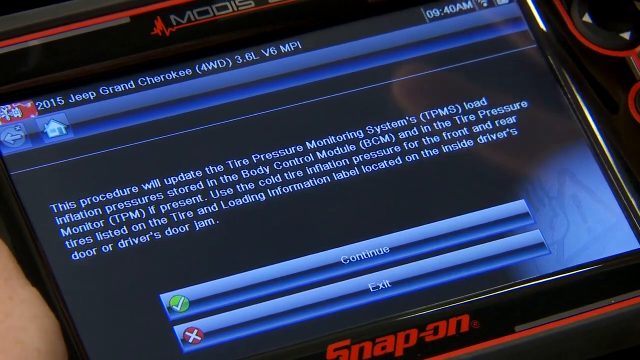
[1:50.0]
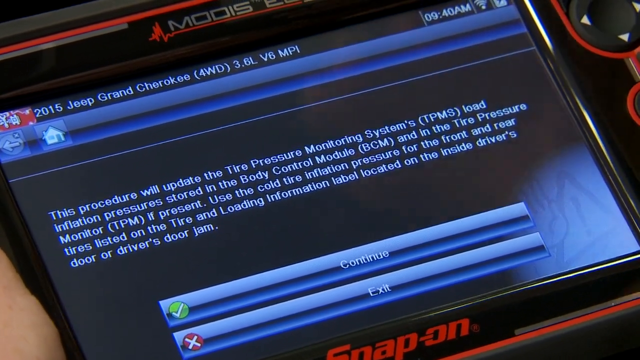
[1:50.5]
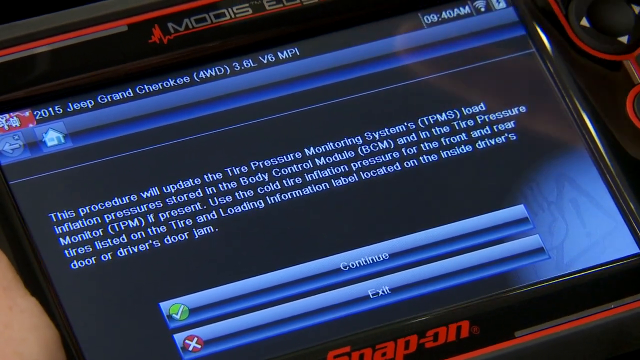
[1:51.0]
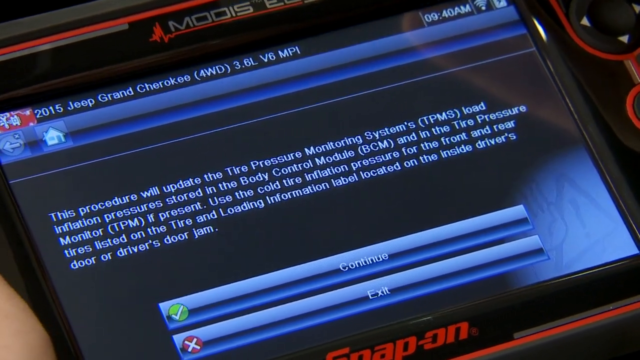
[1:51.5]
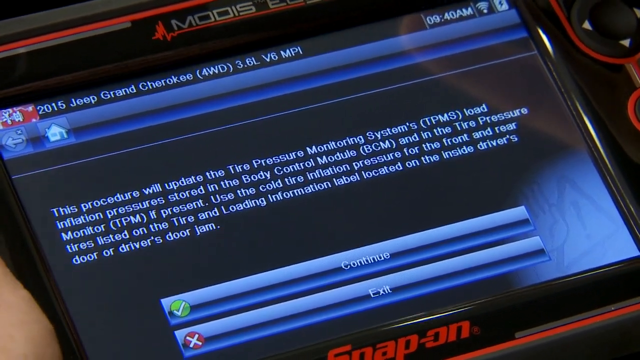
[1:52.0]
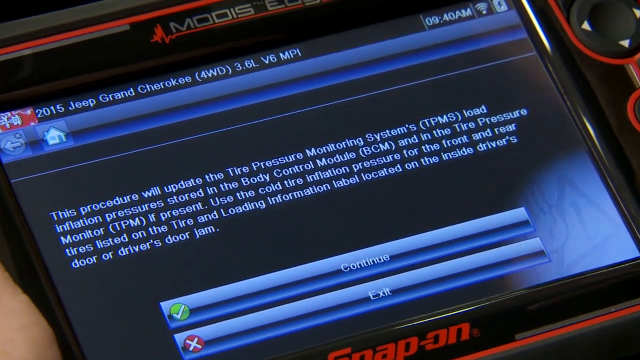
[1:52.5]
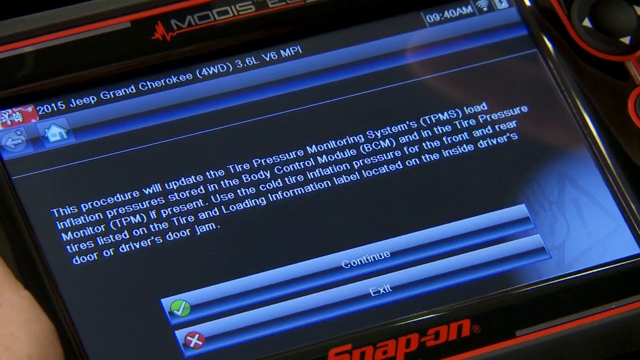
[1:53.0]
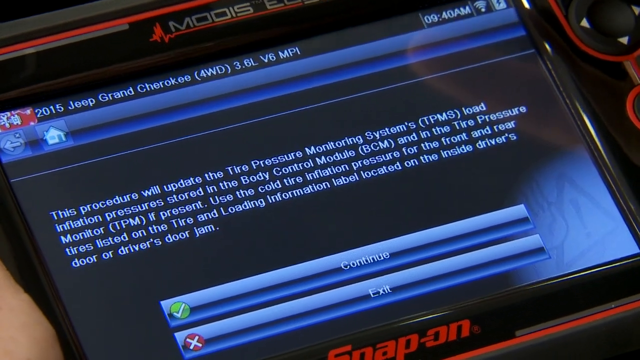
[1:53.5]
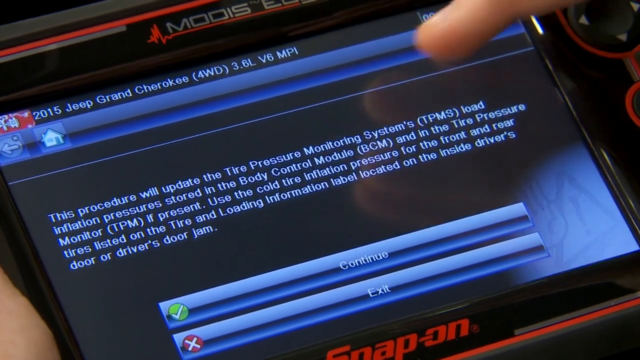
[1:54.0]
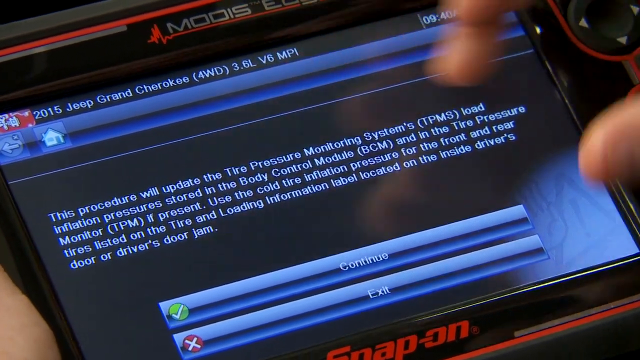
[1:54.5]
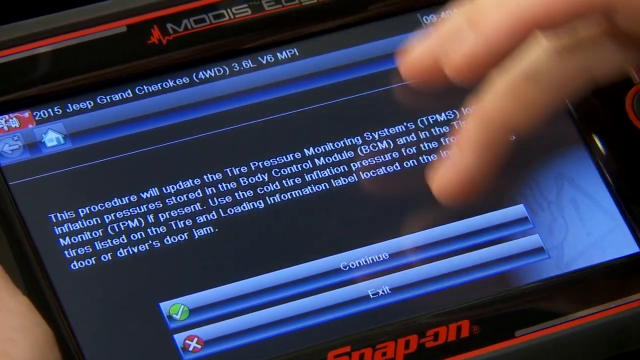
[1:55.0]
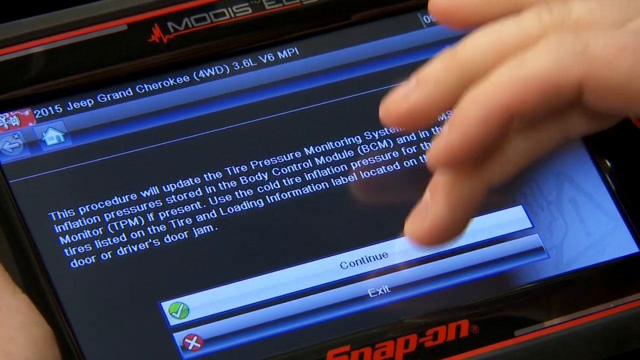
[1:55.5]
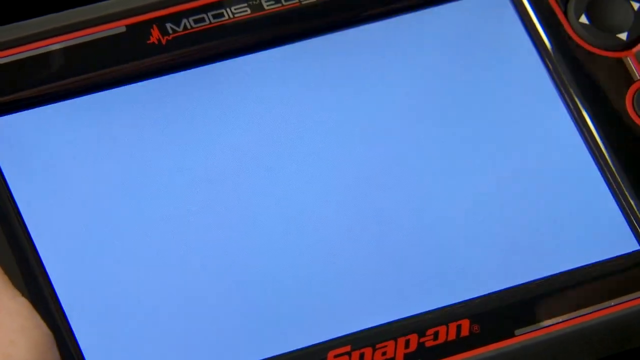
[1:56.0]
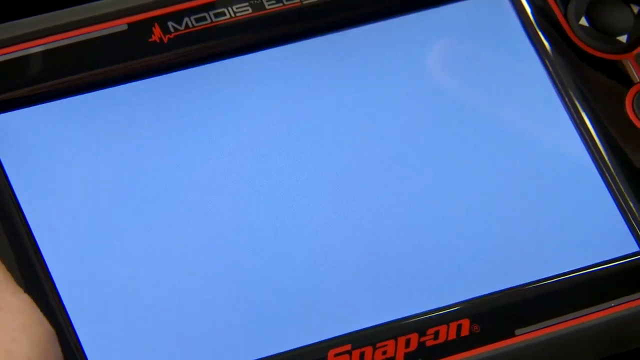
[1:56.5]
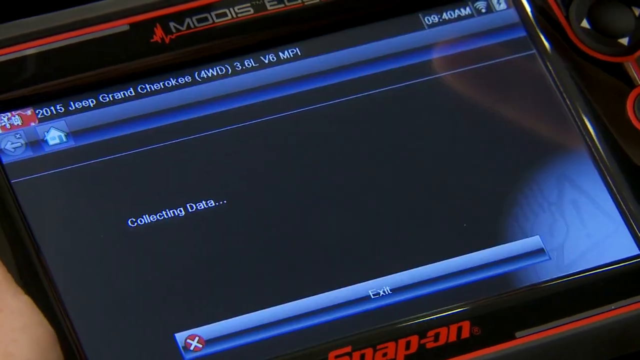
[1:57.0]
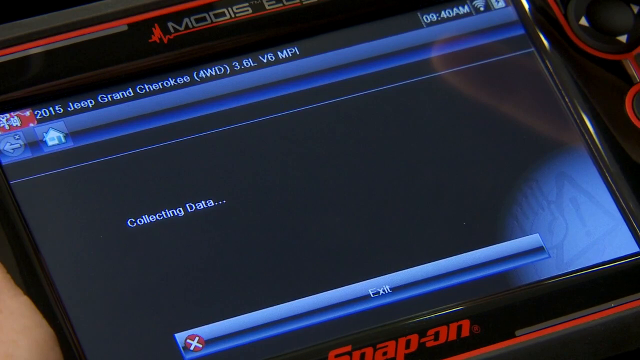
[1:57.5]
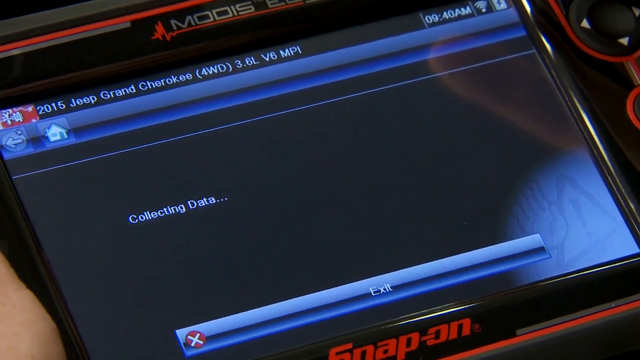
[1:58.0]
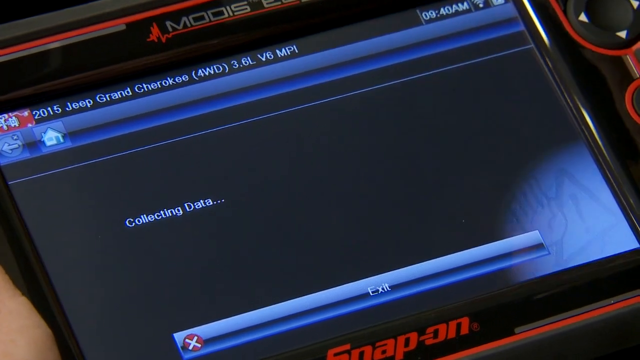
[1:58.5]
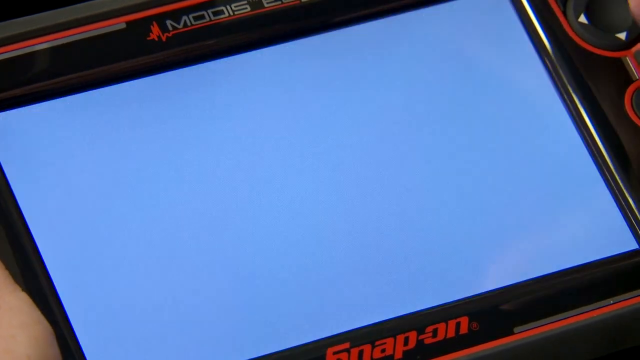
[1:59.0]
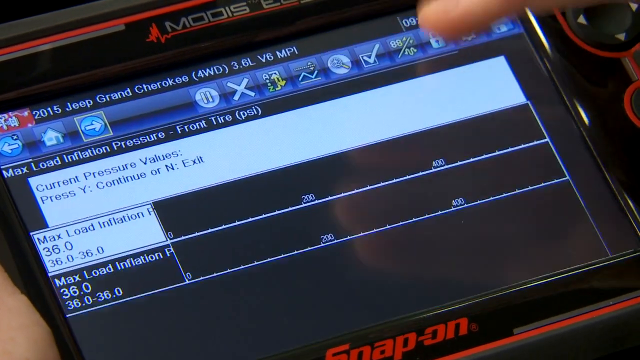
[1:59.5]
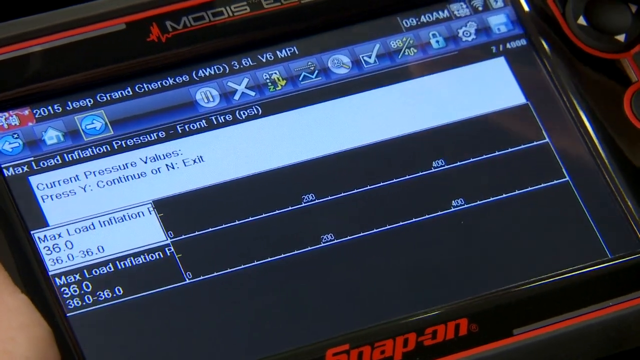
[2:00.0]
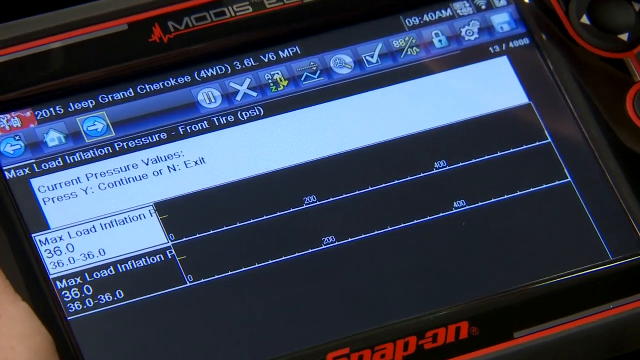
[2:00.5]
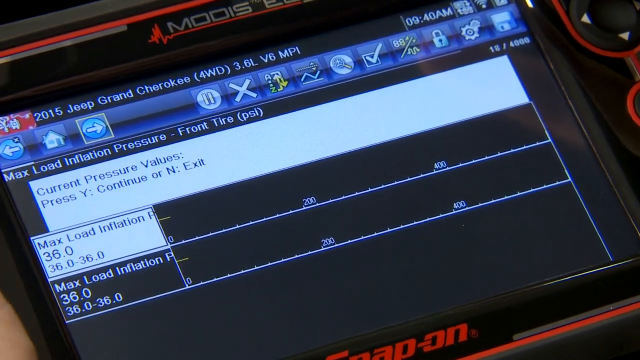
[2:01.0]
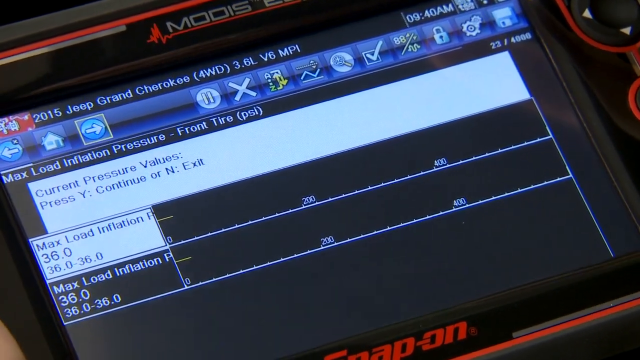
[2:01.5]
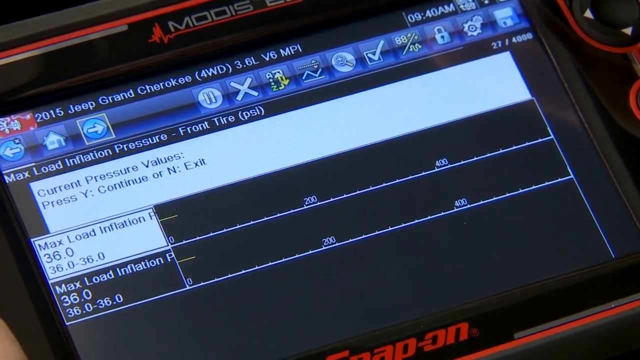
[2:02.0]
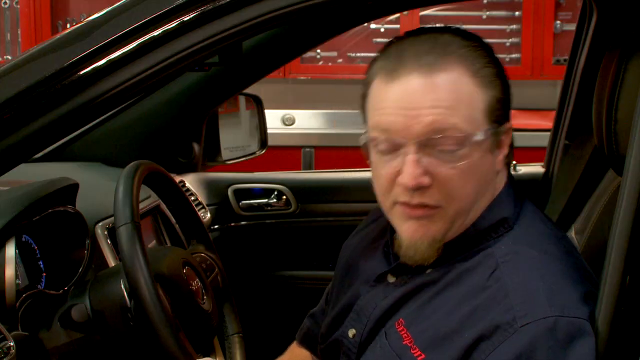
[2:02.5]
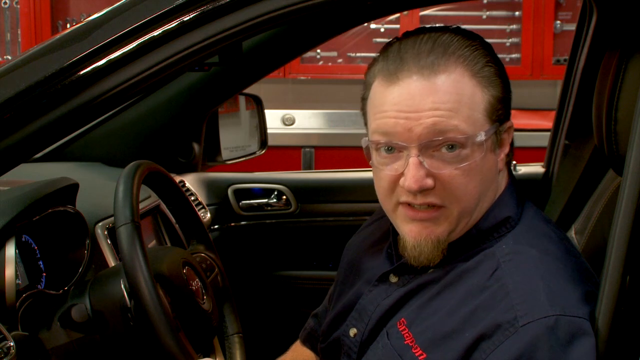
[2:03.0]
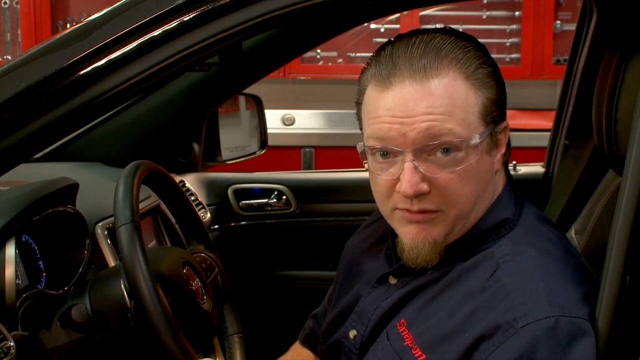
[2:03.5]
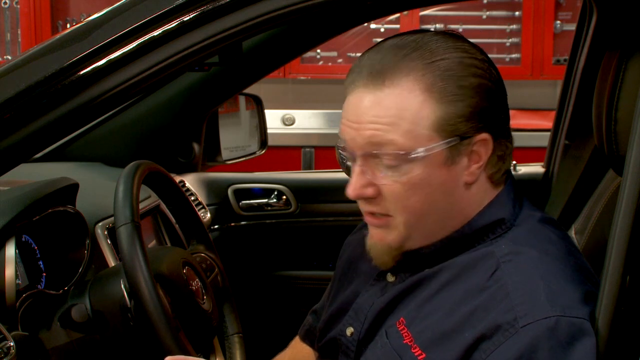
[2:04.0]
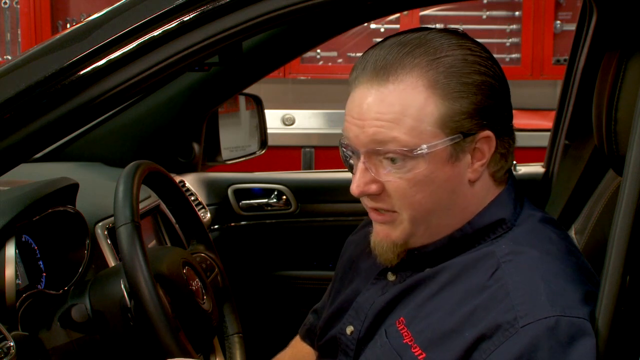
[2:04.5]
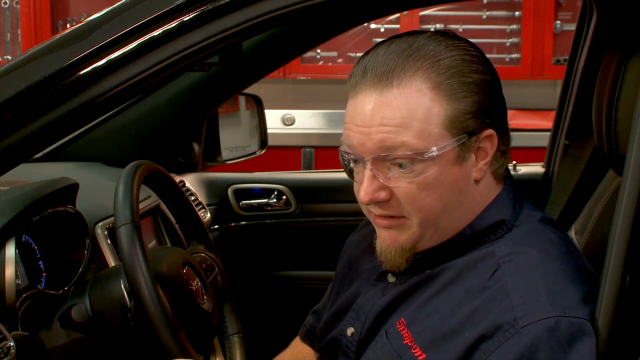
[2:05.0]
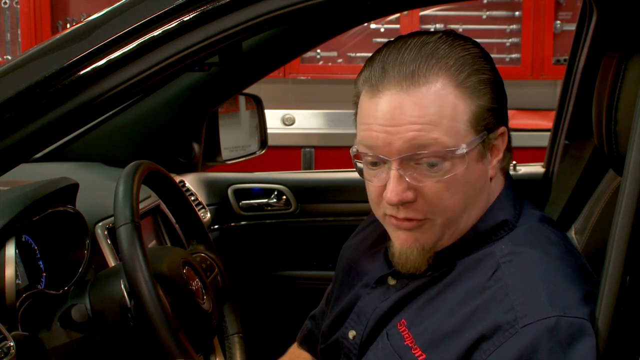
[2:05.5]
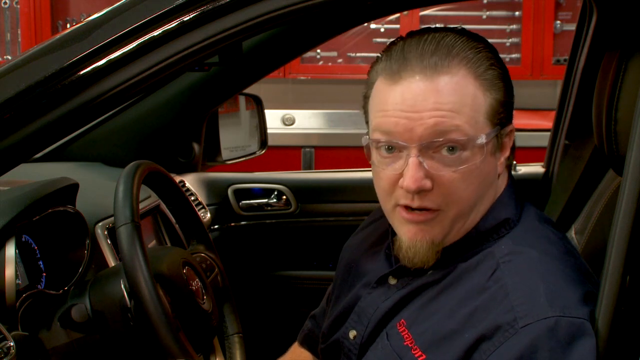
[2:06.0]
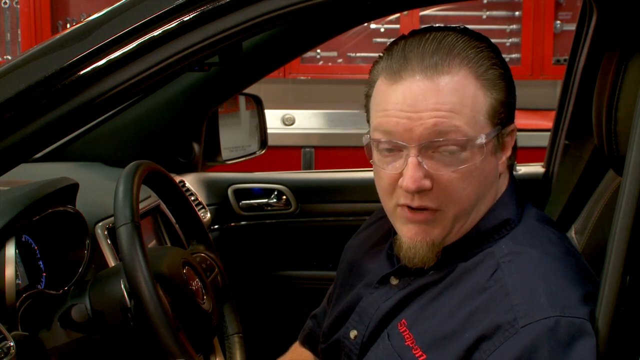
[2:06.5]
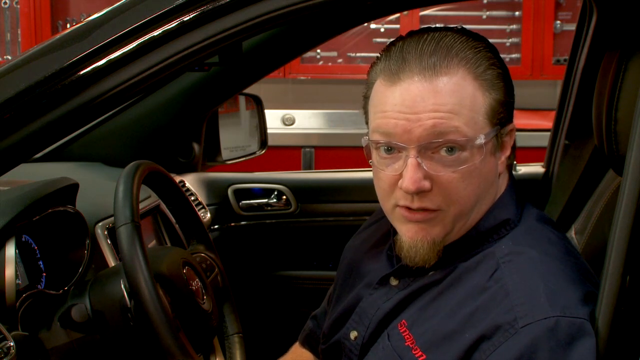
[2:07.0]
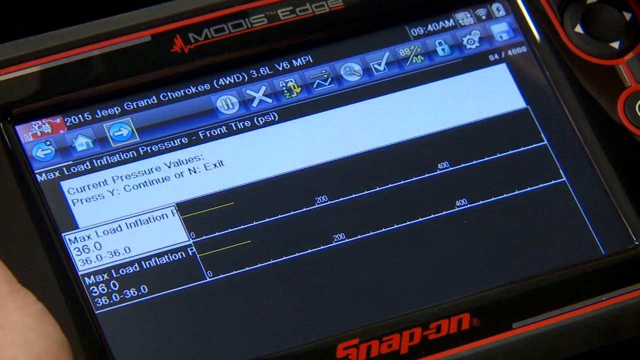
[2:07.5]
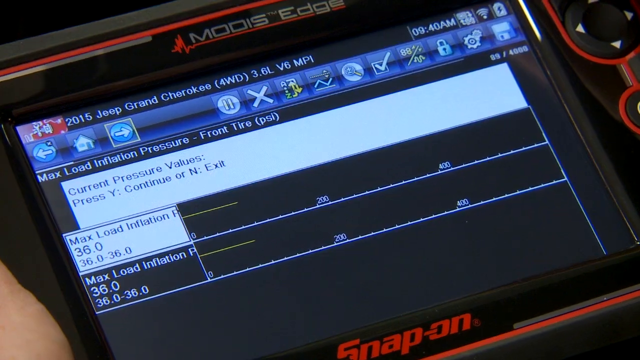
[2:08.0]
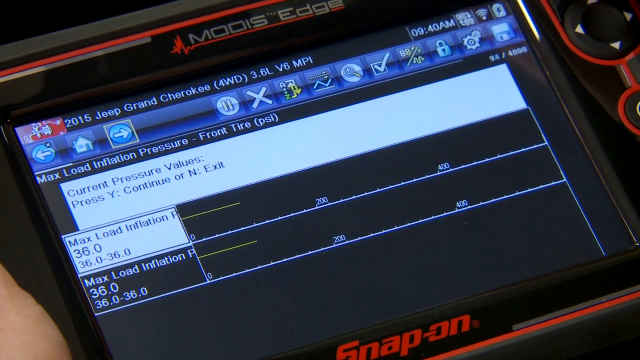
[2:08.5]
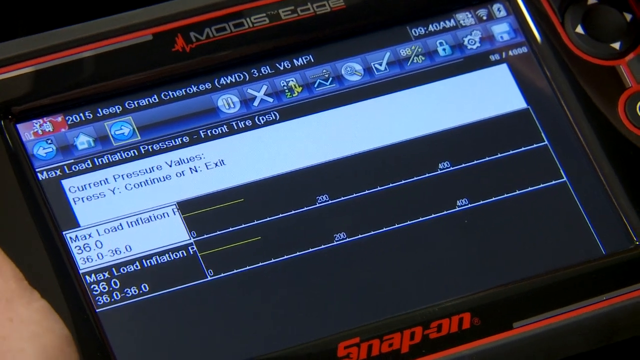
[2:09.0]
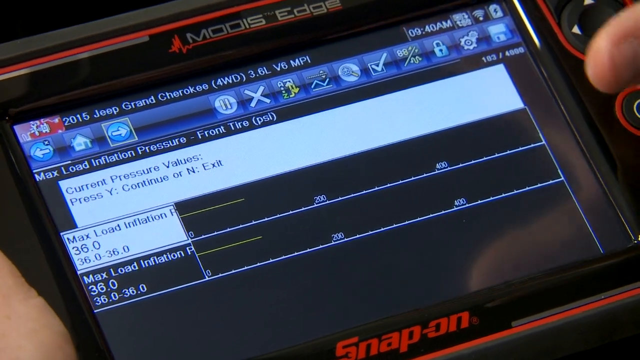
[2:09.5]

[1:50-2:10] The man taps continue, and a screen shows that data is being collected. A data screen then appears on the device showing the current pressure, with the max load inflation reading 36.0. The man is explaining something to the camera. Most of the video is the device screen, with occasional cuts to the man.